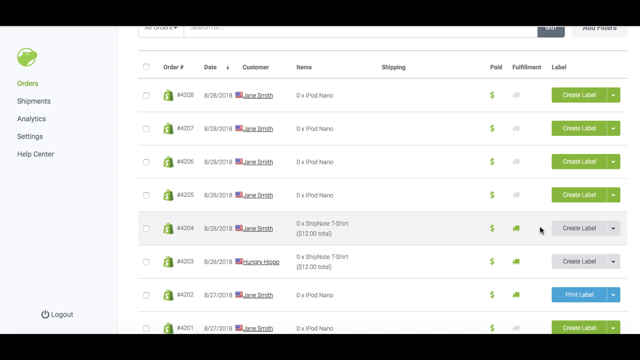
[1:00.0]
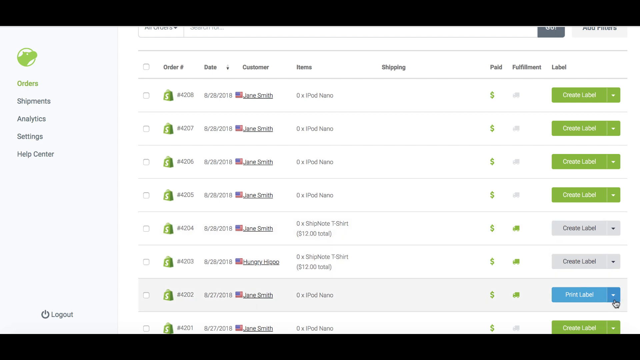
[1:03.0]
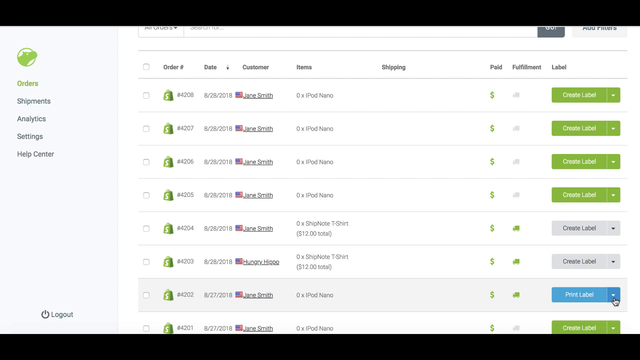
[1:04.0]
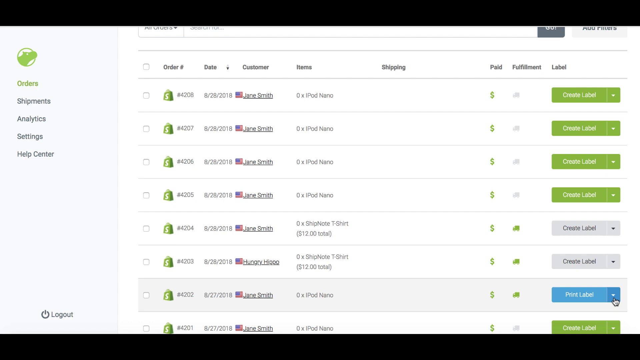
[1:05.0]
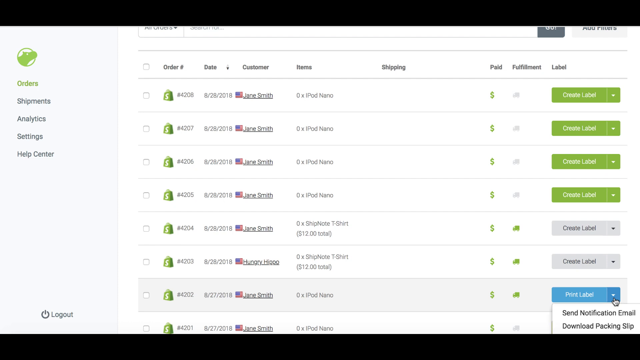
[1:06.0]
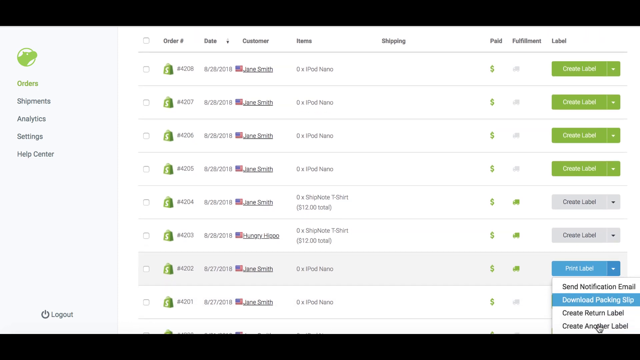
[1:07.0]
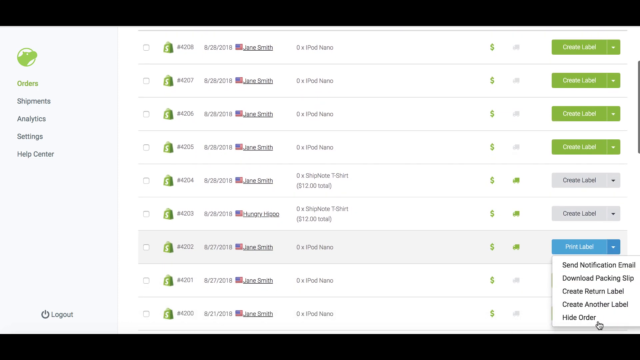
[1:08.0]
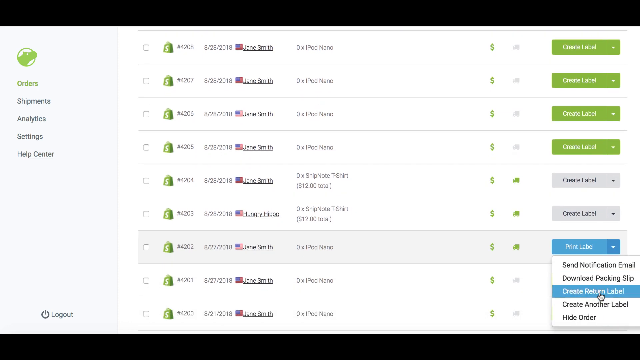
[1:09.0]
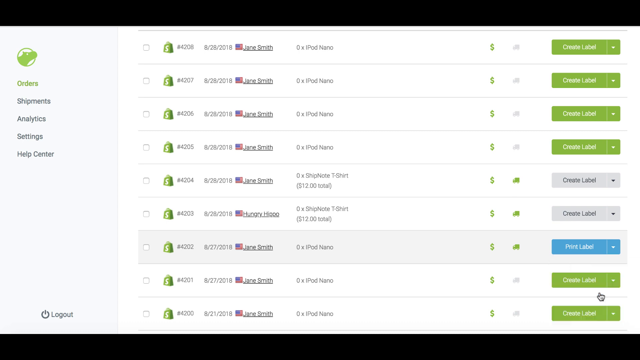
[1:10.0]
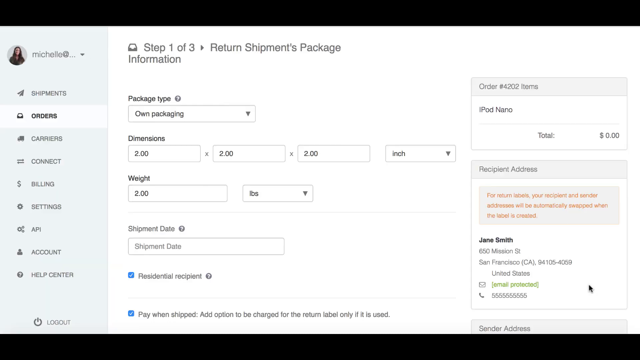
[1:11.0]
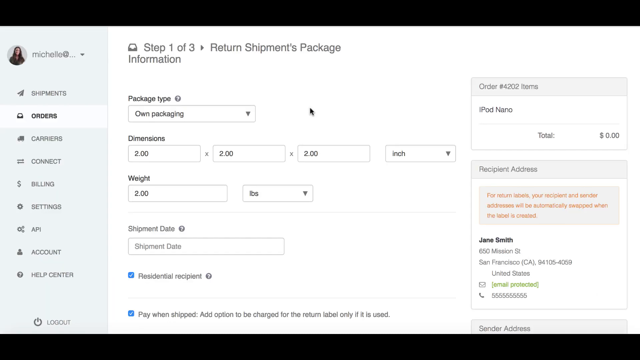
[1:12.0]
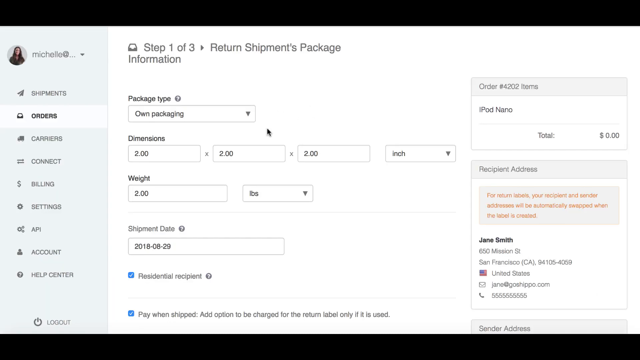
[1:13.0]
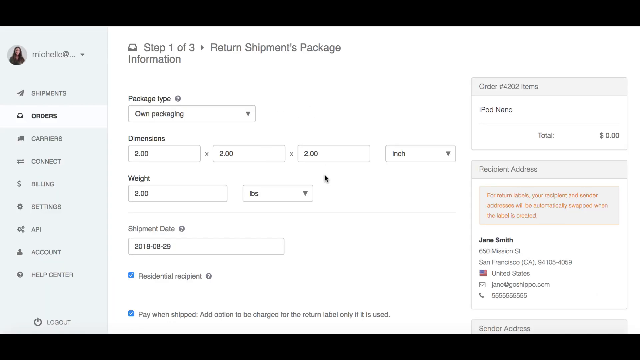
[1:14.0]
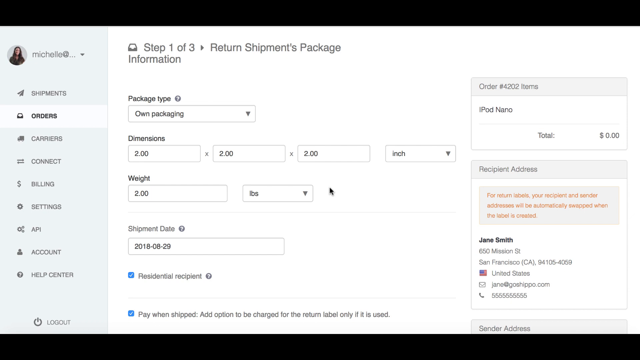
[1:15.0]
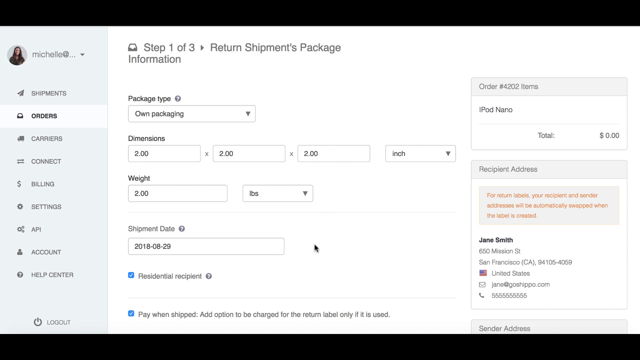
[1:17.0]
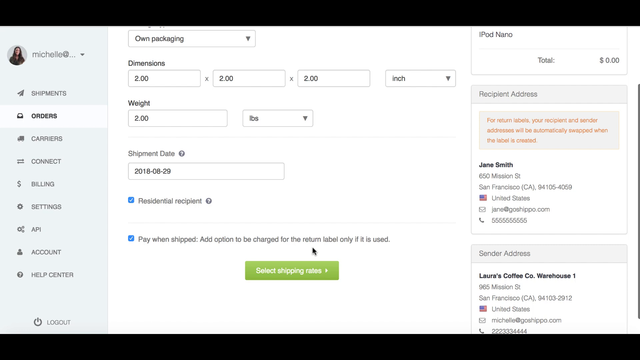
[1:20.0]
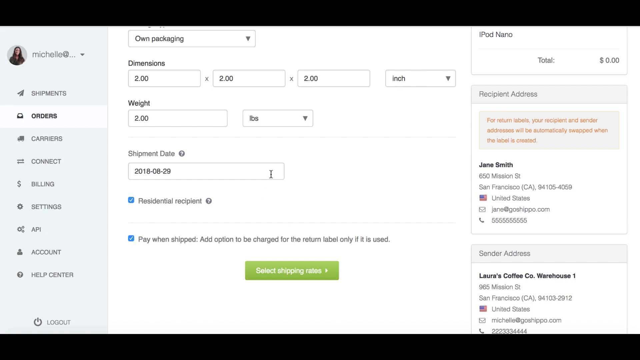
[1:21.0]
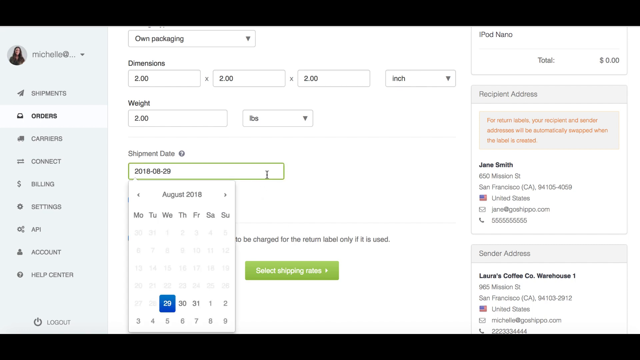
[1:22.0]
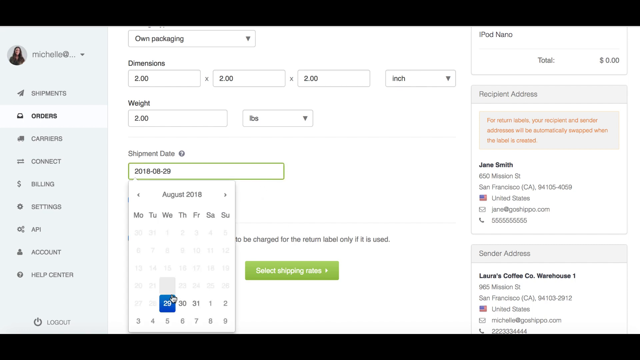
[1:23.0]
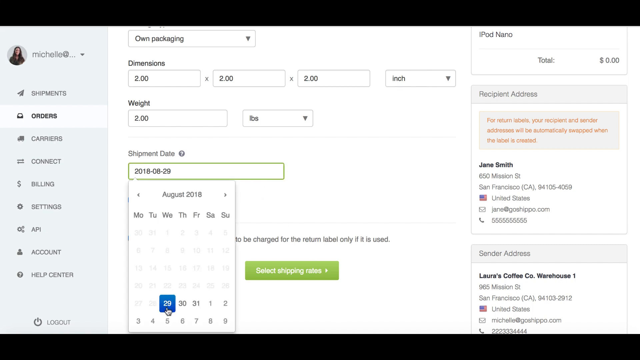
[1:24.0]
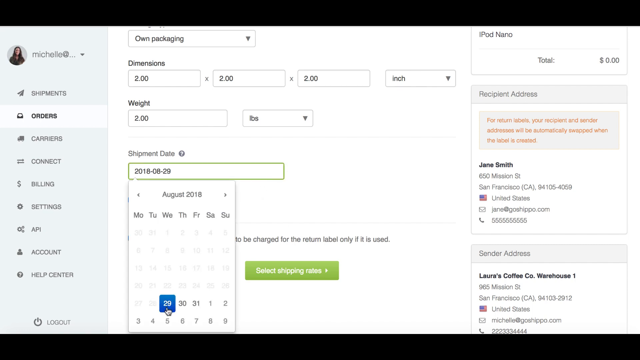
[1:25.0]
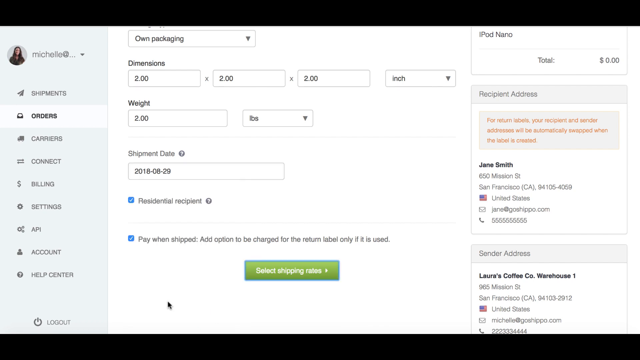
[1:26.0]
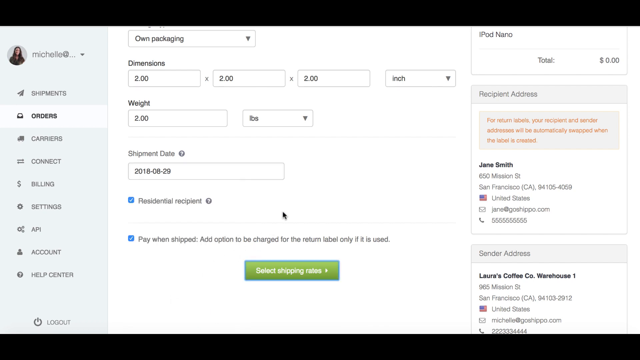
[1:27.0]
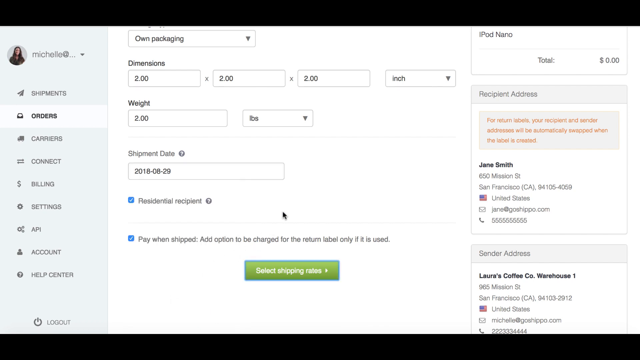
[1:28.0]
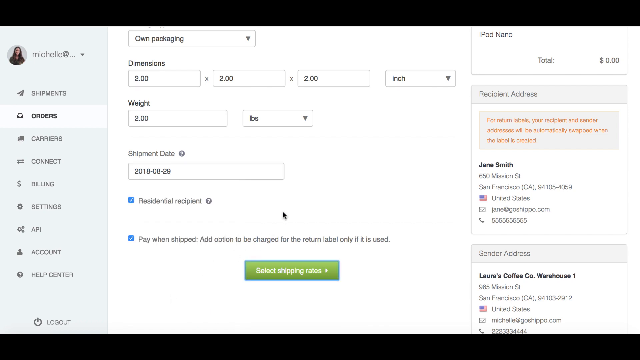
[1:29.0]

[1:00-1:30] The Flipo orders page is shown with a picture of a hippopotamus in the upper left and, underneath it, the menu for Orders, Shipments, Analytics, Settings, and Help Center, with Orders selected. The order numbers run 4208, 4207, and so on down the page, and the customer name on every one is Jane Smith, with the date 8-28-2018. She scrolls down to the print label areas on the side, scrolls through a list that pops up, and goes to create a print label. A screen appears showing step one of three for return shipment packages and information, with settings for using one's own package, dimensions, weight in pounds, and a shipping date, plus options for "Residential Recipient" or "Business Recipient."